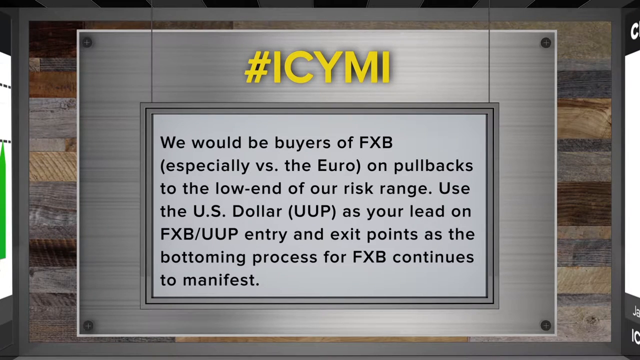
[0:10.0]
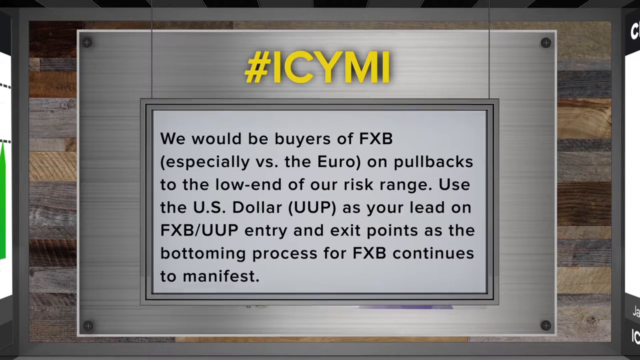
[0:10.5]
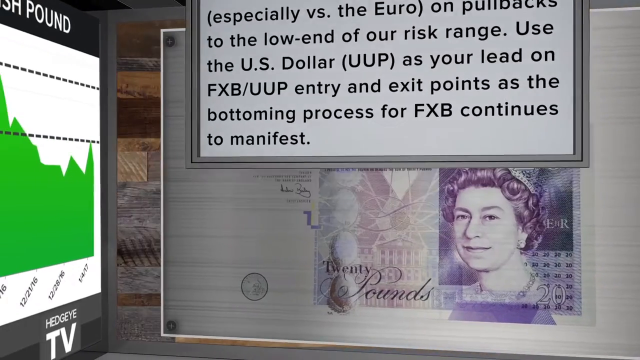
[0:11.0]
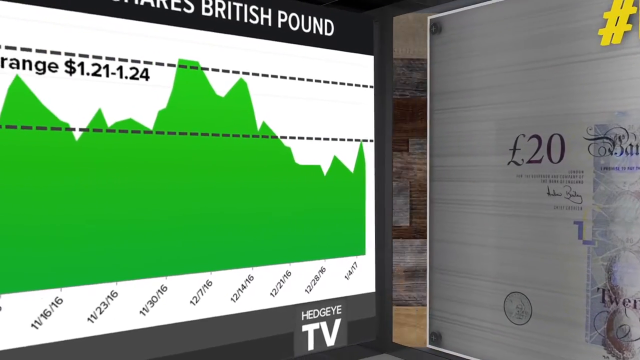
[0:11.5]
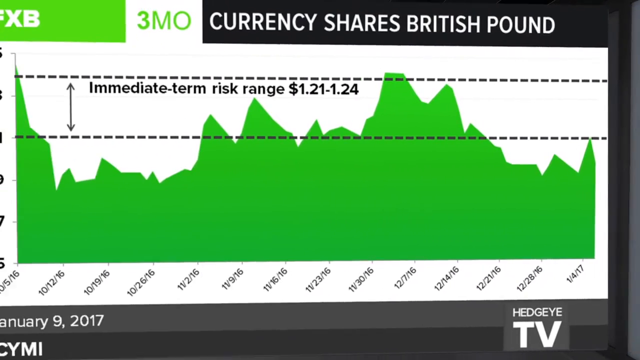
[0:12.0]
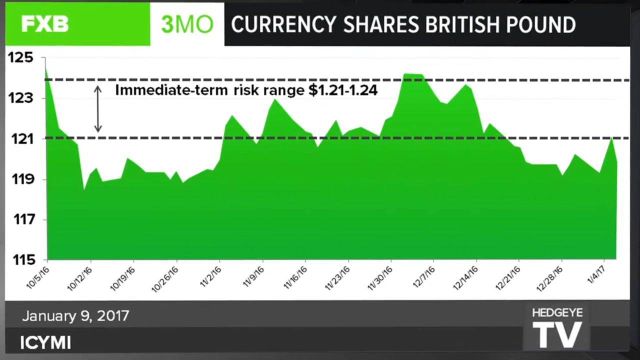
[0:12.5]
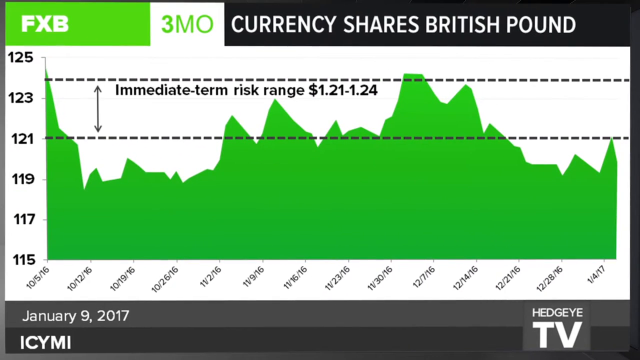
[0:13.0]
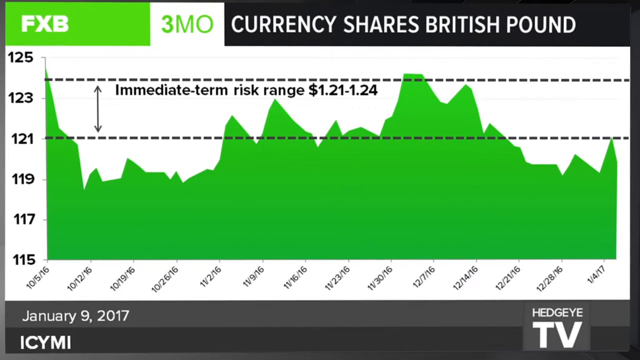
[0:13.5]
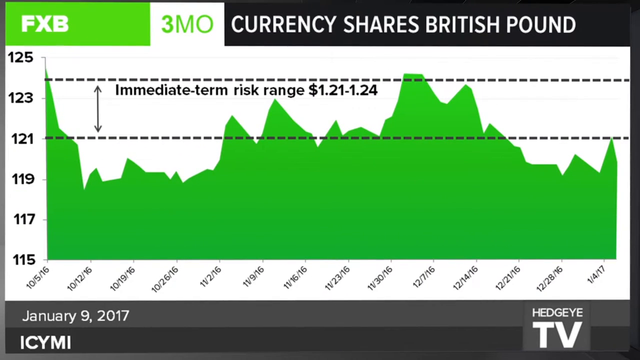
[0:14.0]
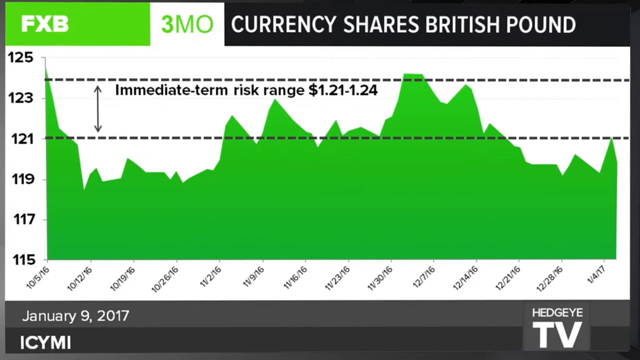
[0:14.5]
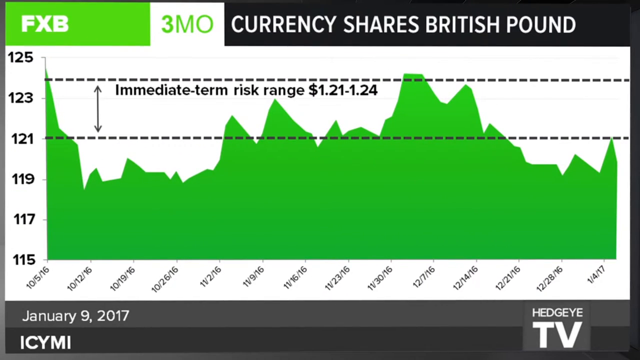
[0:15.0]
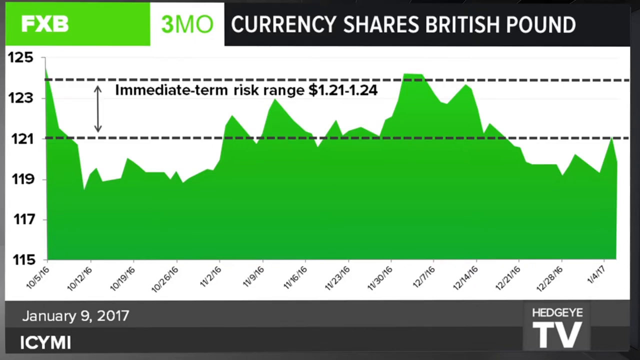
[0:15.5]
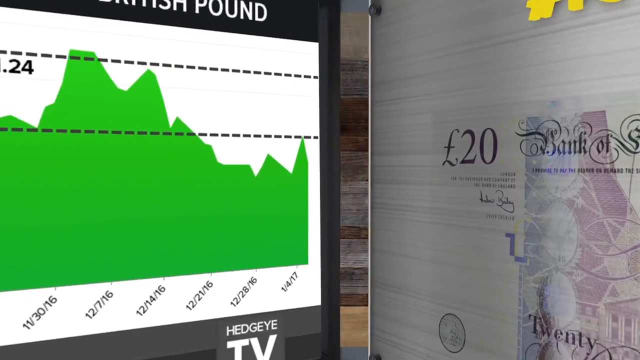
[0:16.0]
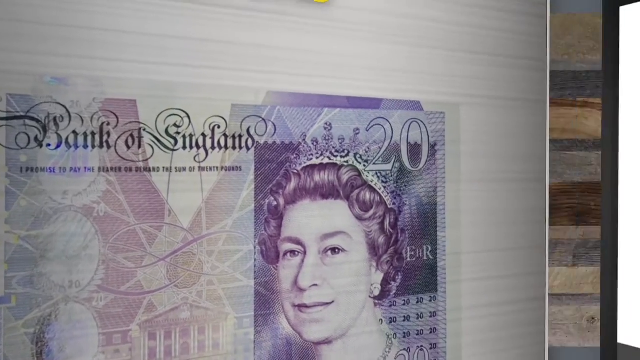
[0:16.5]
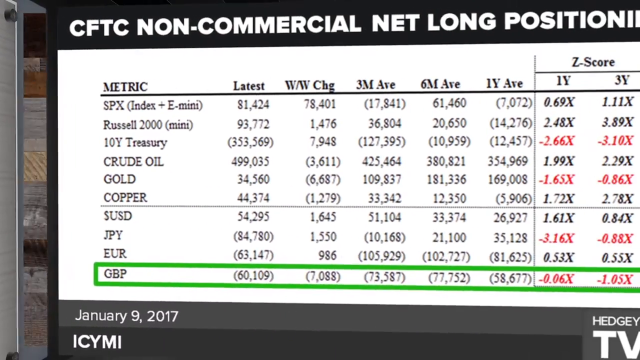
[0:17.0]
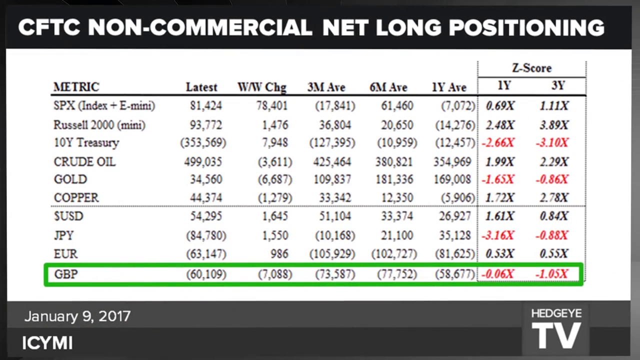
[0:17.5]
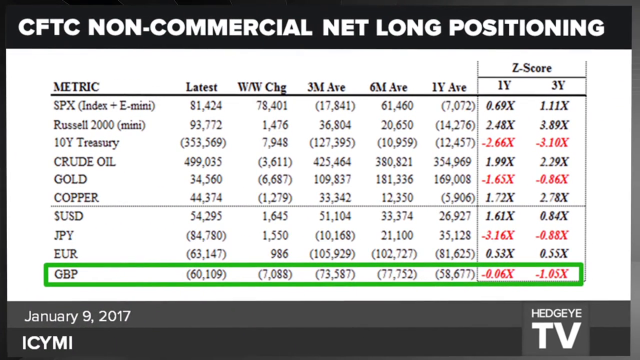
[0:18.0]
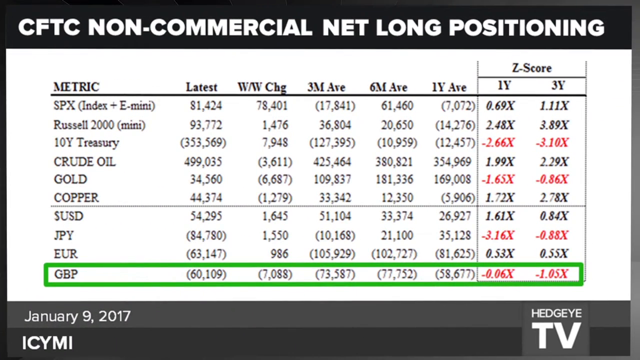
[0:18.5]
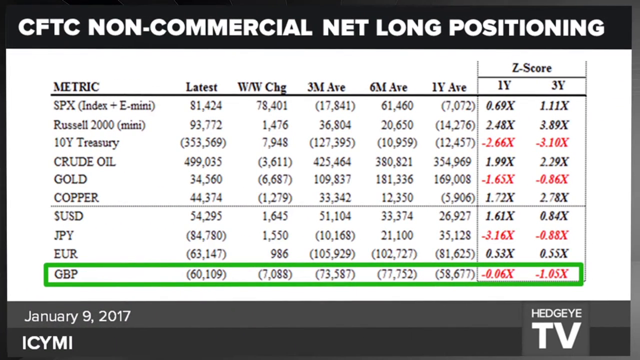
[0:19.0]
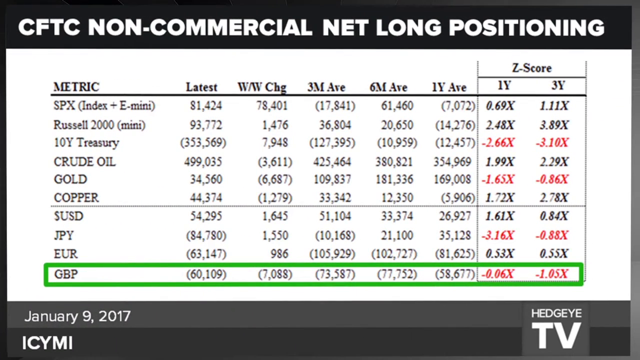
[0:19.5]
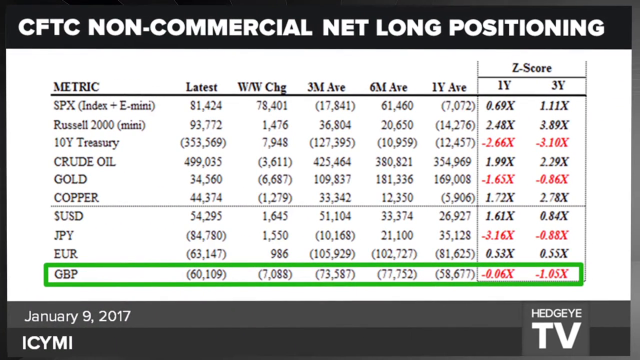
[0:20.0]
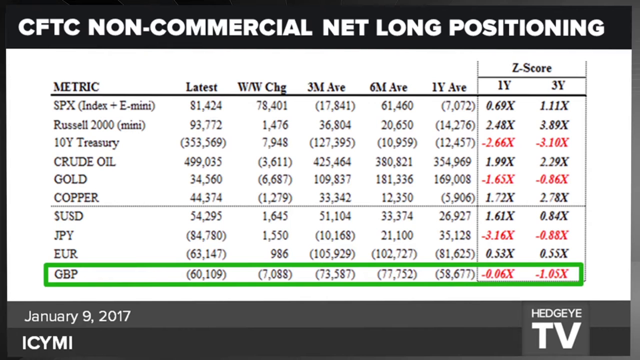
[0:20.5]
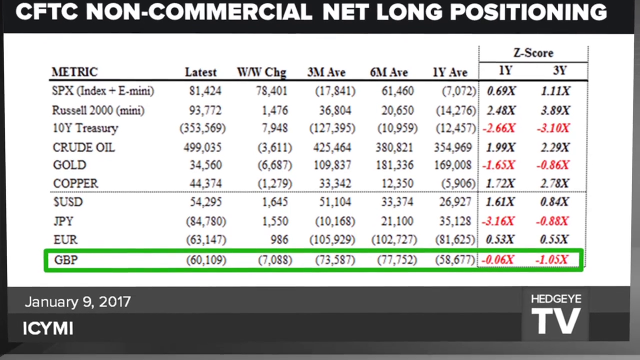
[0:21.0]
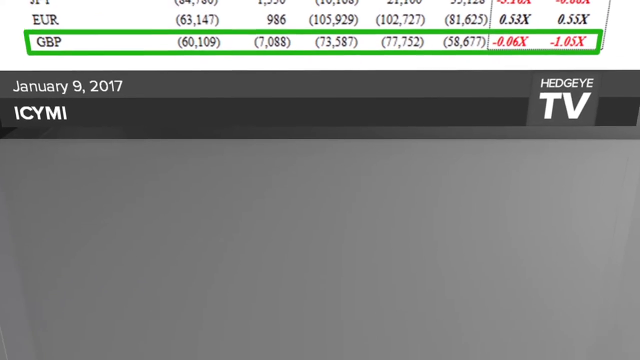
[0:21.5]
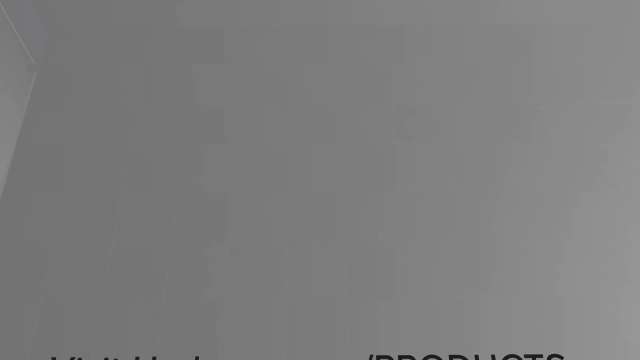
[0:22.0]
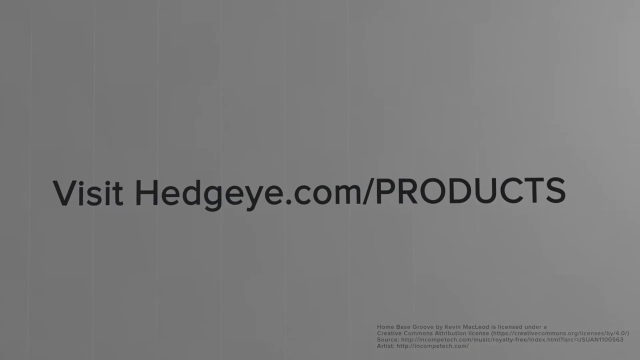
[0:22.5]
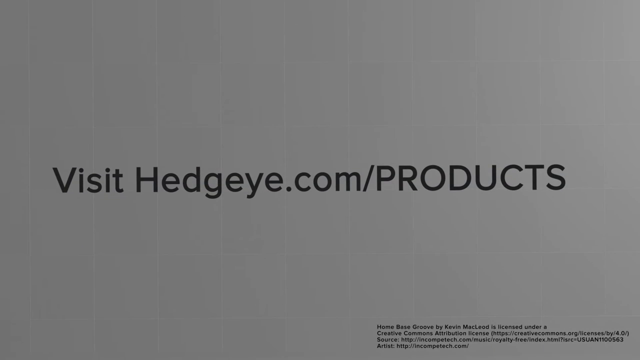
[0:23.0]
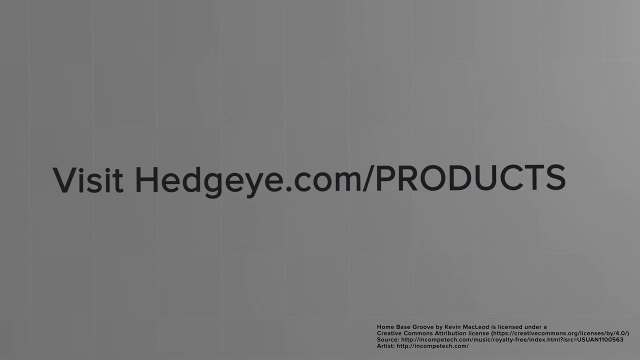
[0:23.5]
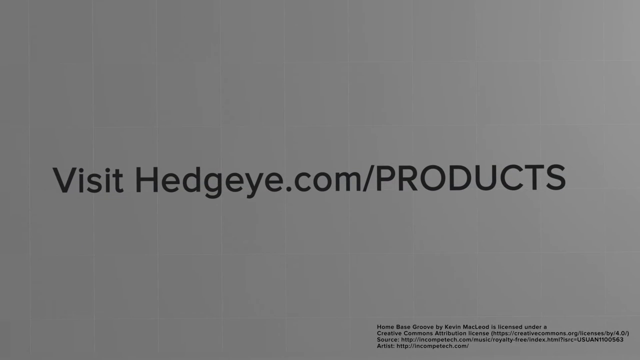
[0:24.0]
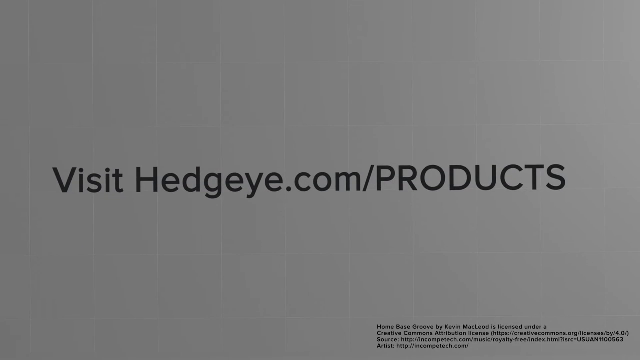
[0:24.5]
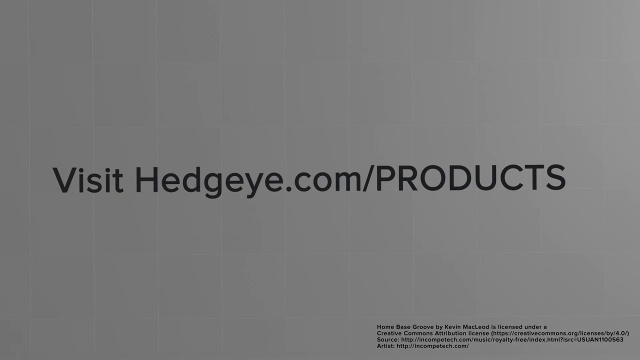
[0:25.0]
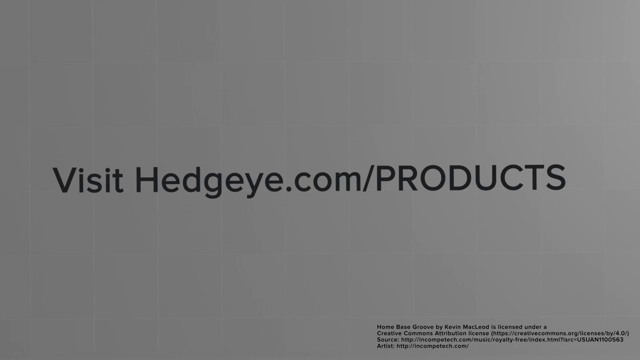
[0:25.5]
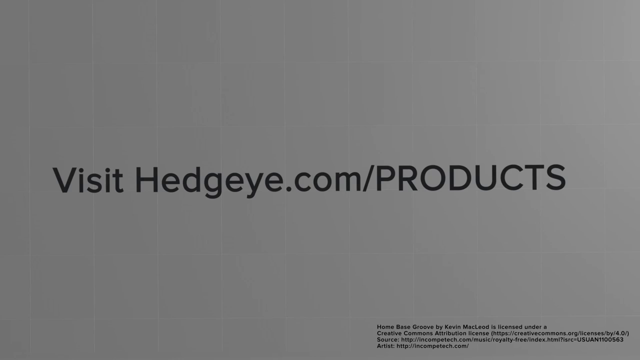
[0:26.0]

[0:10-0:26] A green graph on a white background is labeled with currency shares, British Pound, FXB, 3 months. It shows numbers including 123, 121, 119, 117 and 118, along with a period of dates. The top of the graph marks an immediate 10-week range of $1.21 to $1.24. The graph does not seem to show any serious or major fall; the currency looks fairly stable. The video then moves to a table titled something like "CFC non-commercial net long positions," listing items with their numbers. Headings include metrics, WCAG, 3MAVE, 6MAVE, IYAVE and ZISCORE, with IY and 3Y under ZISCORE. The metrics listed include SPX, Roussel 2000, 10Y Treasury, Crude Oil, Gold, Copper, USD, GYP, Euro and GBP. The table possibly shows the inflow of certain commodities.